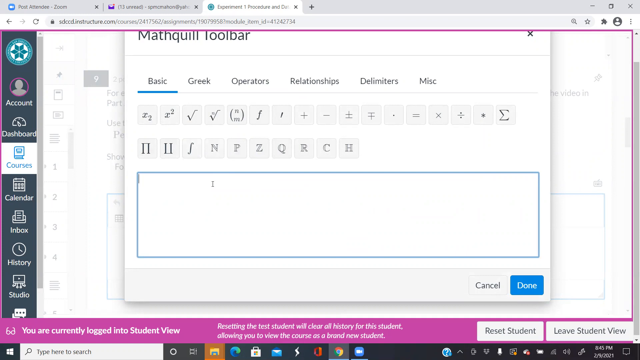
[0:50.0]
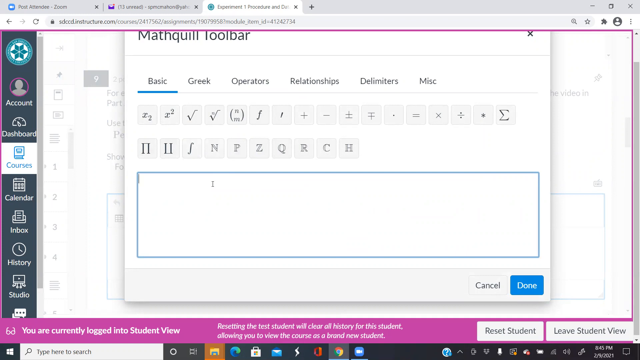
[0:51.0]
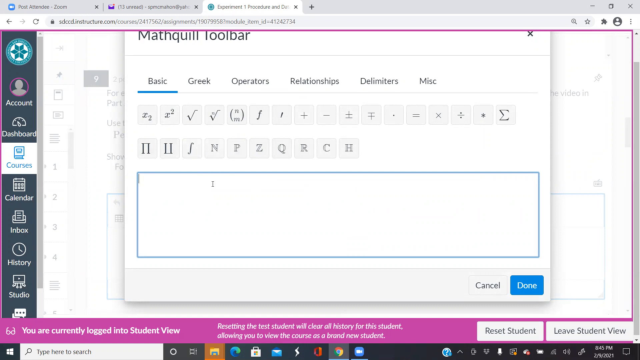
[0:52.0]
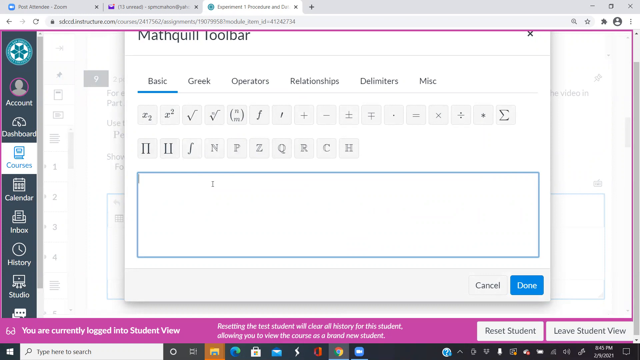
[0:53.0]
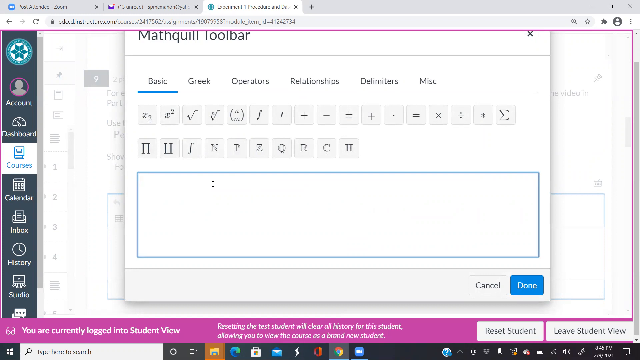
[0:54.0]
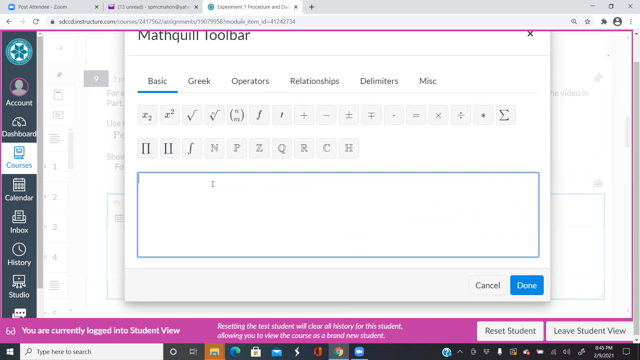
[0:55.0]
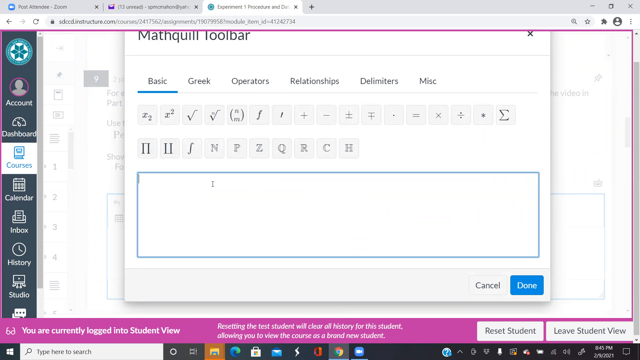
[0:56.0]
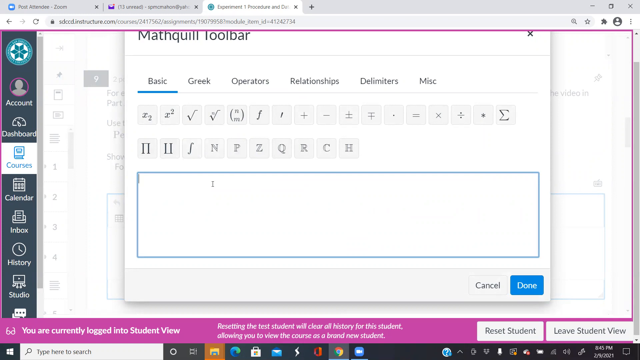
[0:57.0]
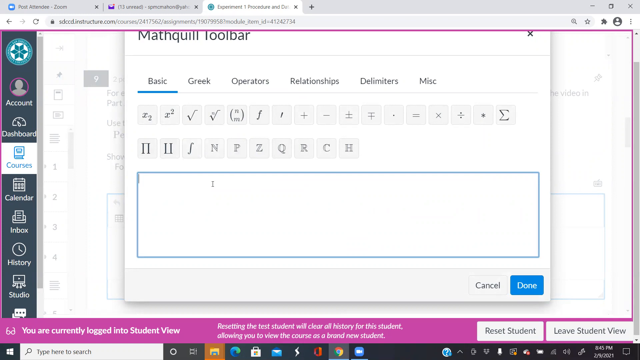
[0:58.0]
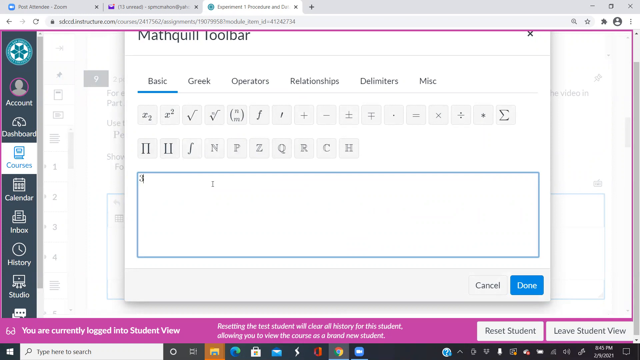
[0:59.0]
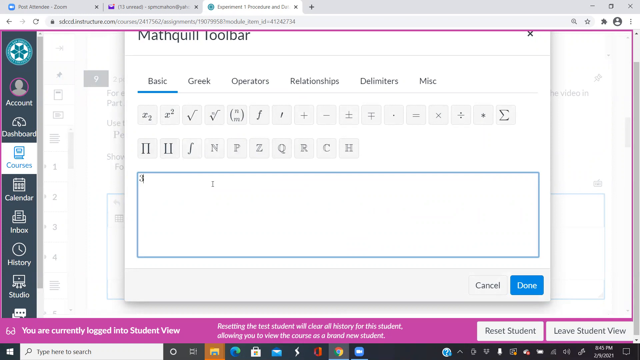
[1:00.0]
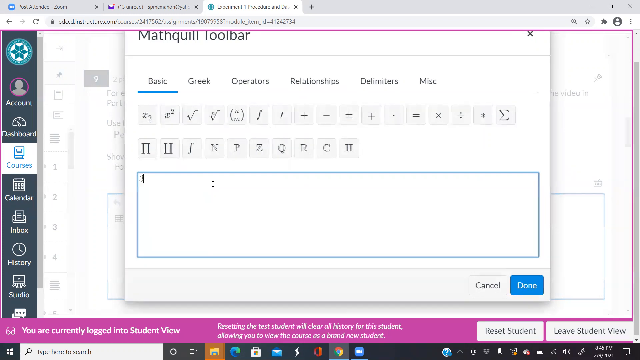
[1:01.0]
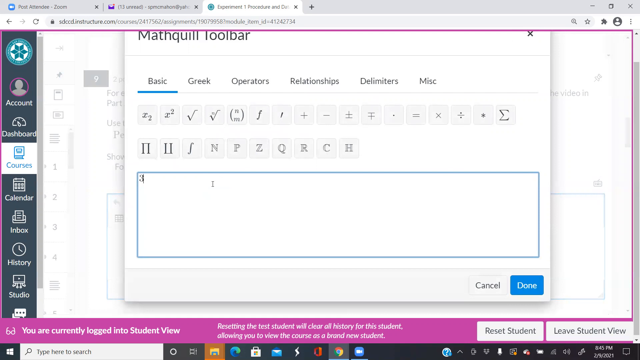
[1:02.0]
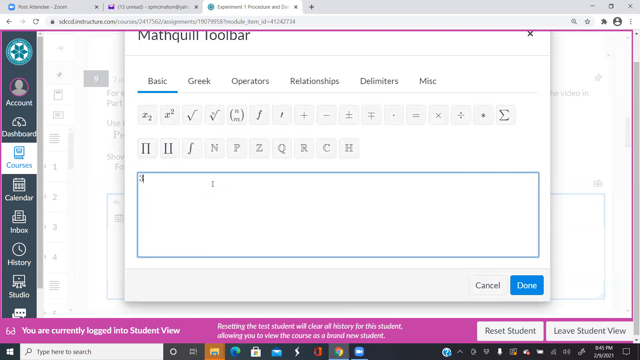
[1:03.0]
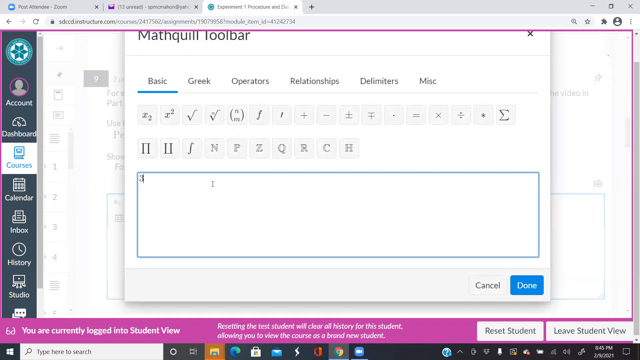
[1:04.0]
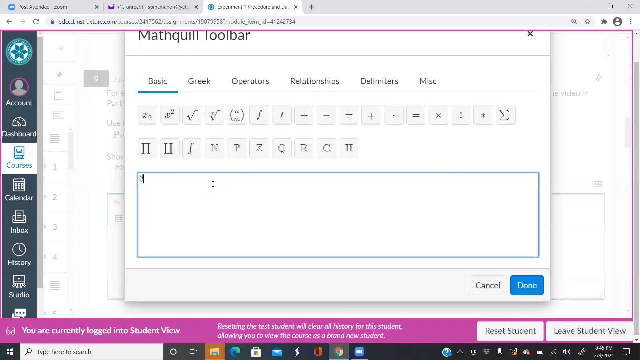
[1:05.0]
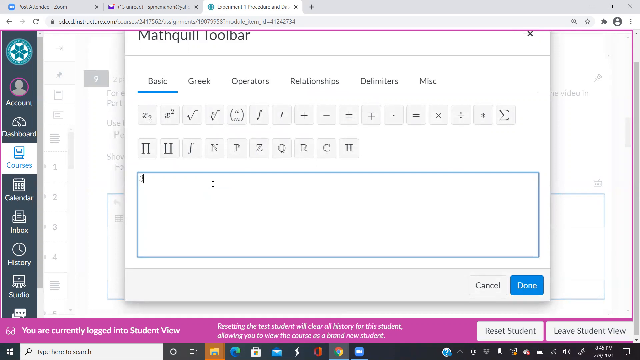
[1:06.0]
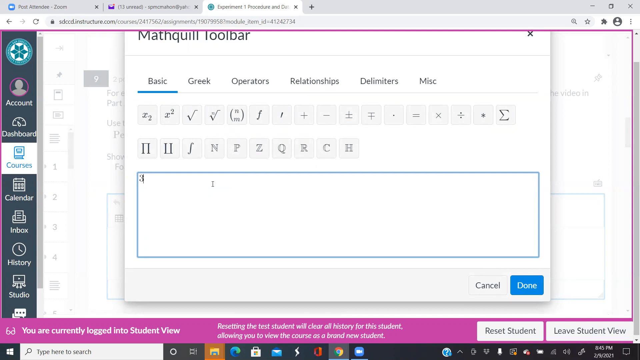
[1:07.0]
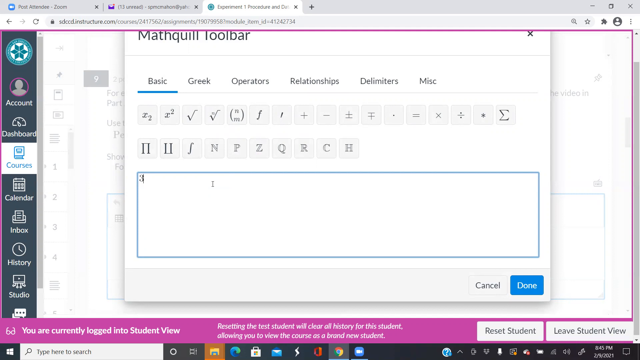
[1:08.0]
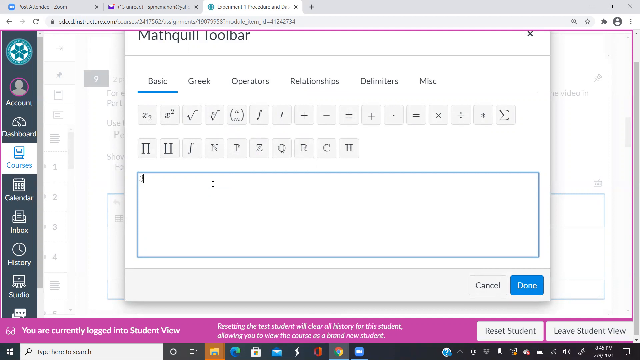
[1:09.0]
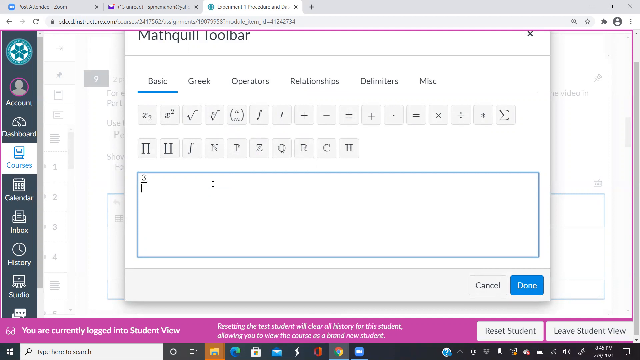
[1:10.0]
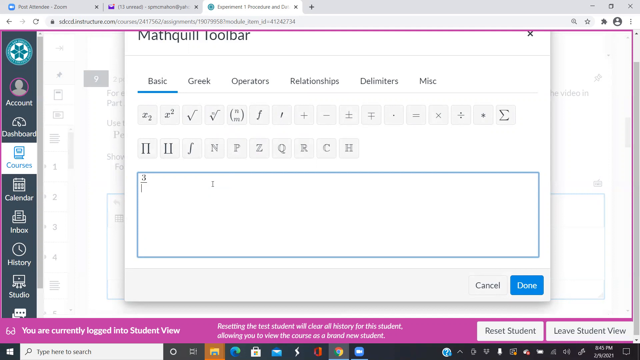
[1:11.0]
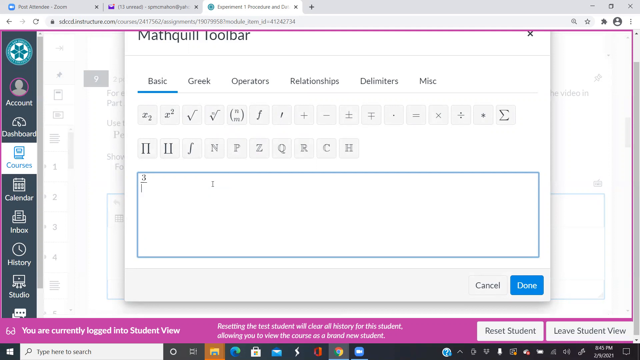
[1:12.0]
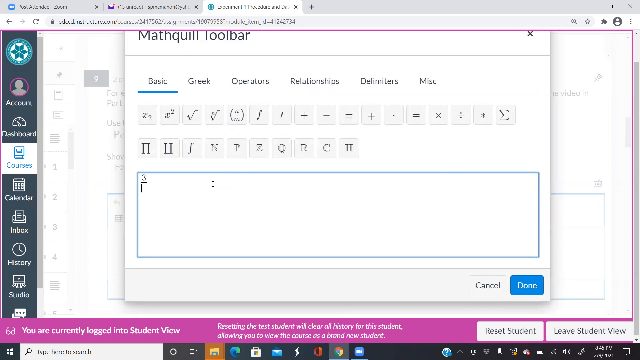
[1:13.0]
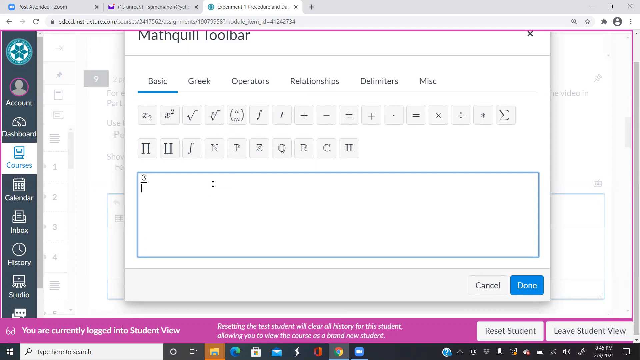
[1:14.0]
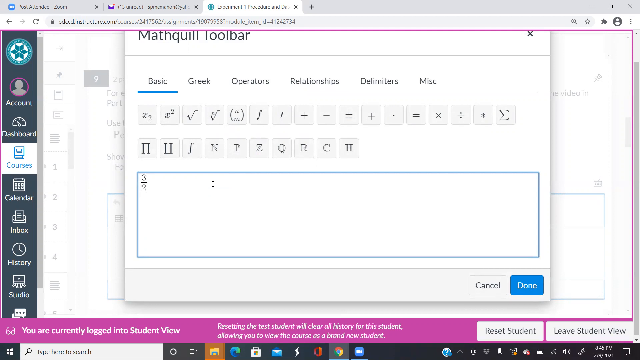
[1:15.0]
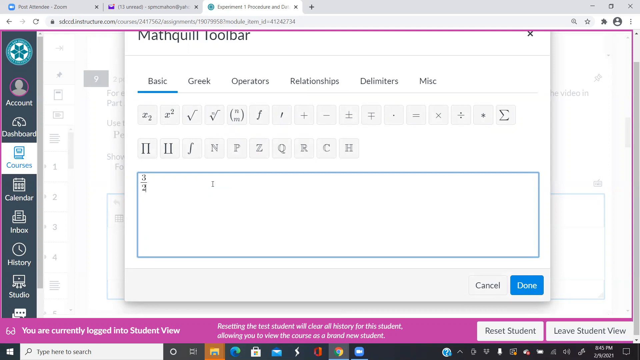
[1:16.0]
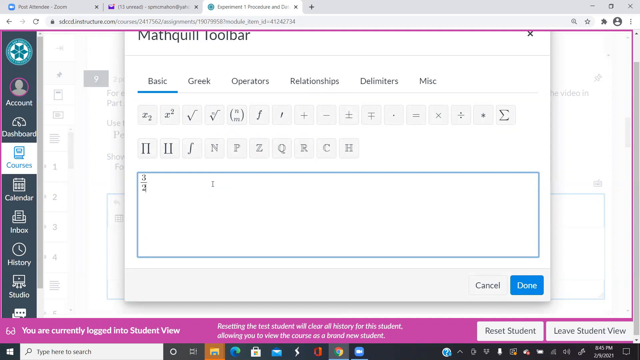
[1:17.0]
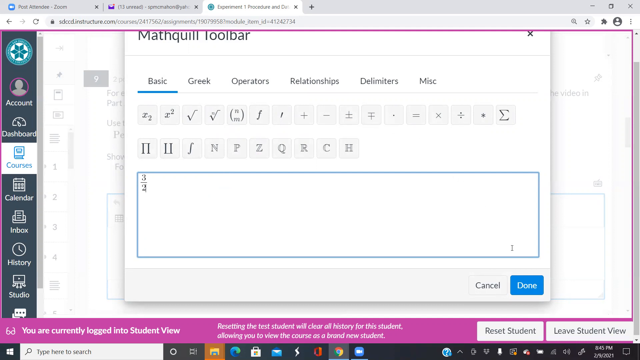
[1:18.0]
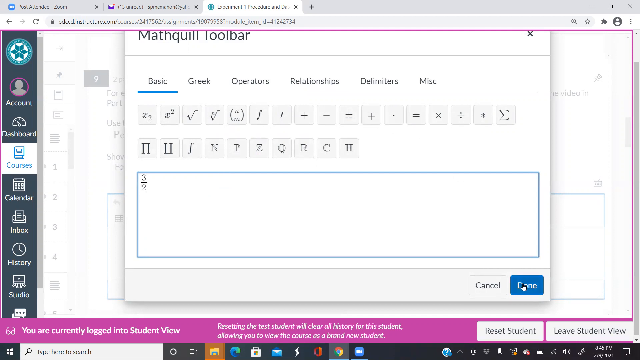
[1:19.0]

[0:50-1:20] A student is logged into their student portal, which says they are in student view mode. A tab open under courses says "experiment 1 data sheet", with "estimates" below it, followed by questions and an explanation of what estimates are. The student scrolls down, answers a question about percent difference and types in the answer. The student keeps scrolling up and down with the mouse, the arrow moving up and down on the screen. The student then saves the work and submits the assignment even though not all of the questions are answered, and a pop-up message asks whether the student is sure about submitting with questions unanswered.